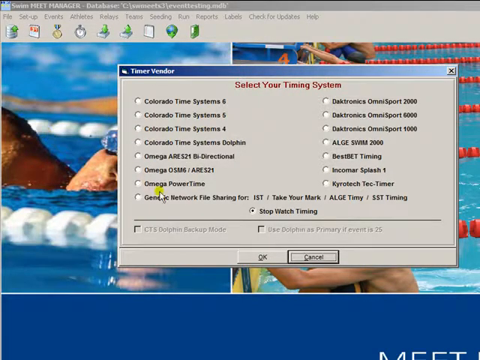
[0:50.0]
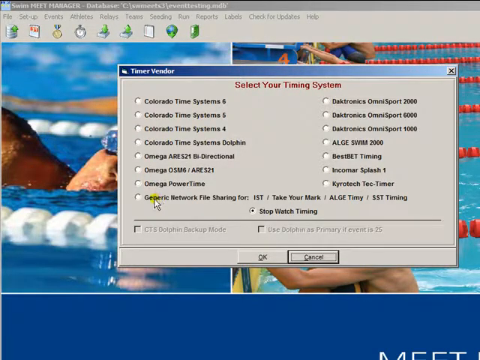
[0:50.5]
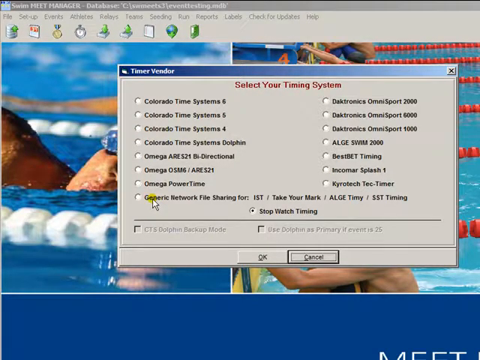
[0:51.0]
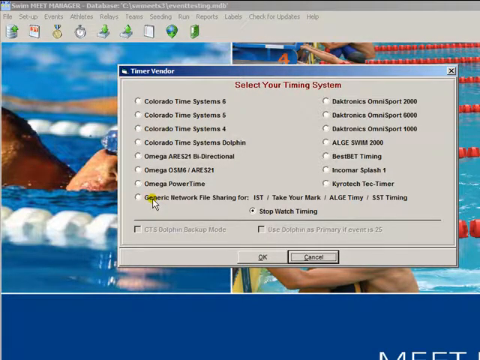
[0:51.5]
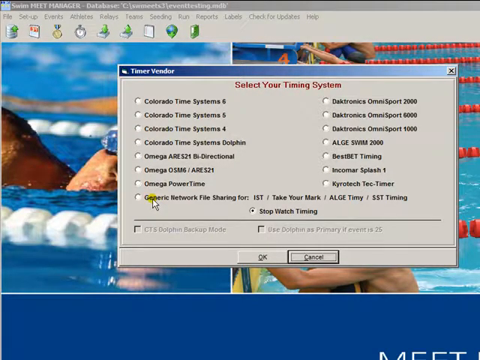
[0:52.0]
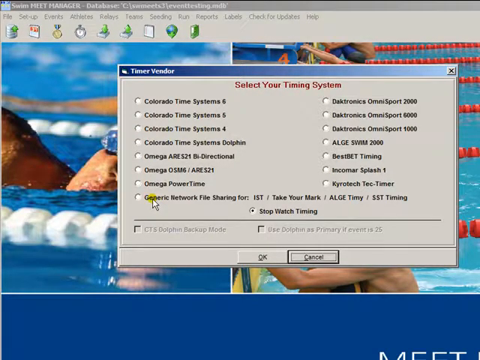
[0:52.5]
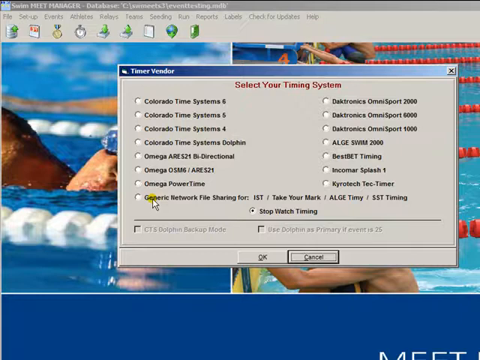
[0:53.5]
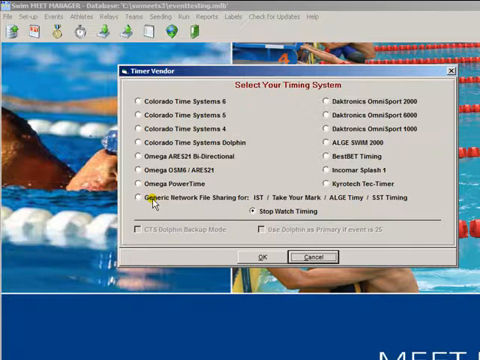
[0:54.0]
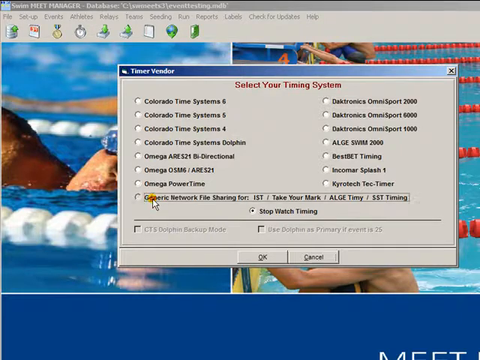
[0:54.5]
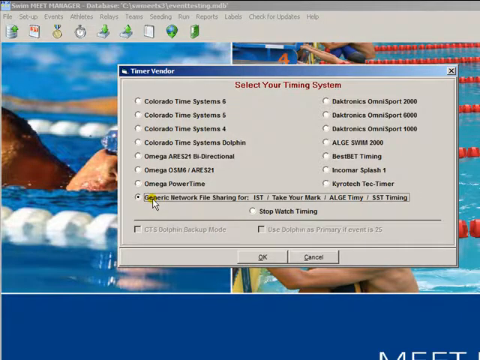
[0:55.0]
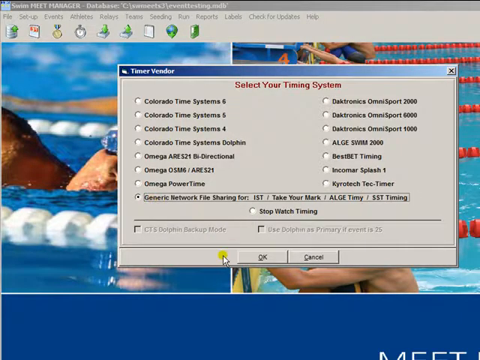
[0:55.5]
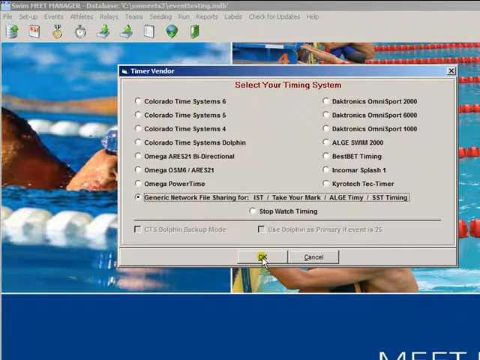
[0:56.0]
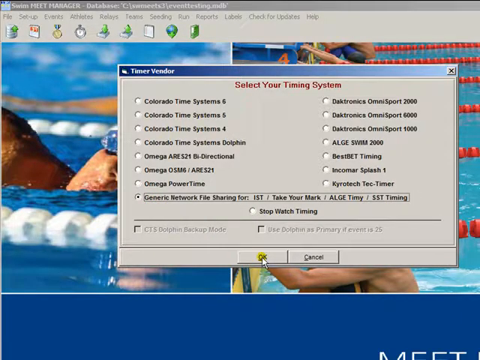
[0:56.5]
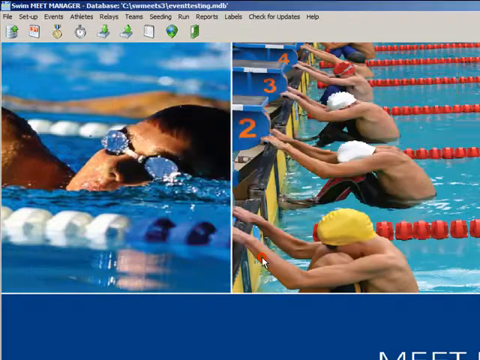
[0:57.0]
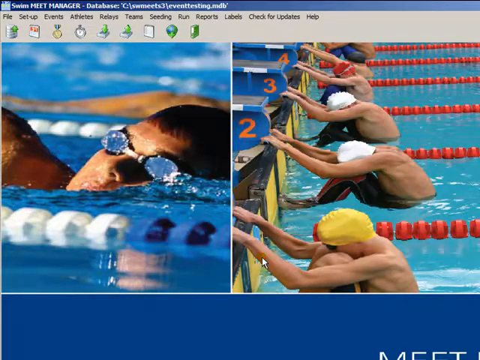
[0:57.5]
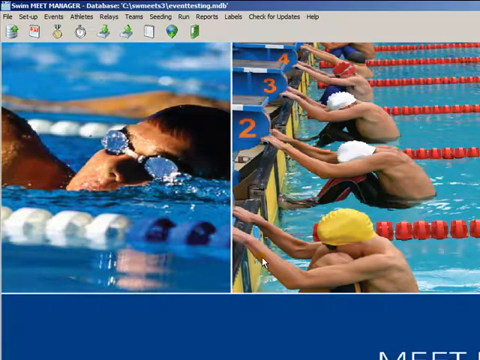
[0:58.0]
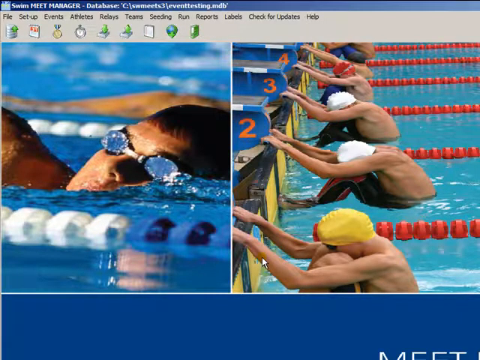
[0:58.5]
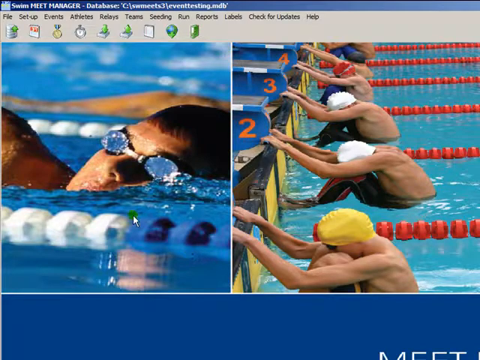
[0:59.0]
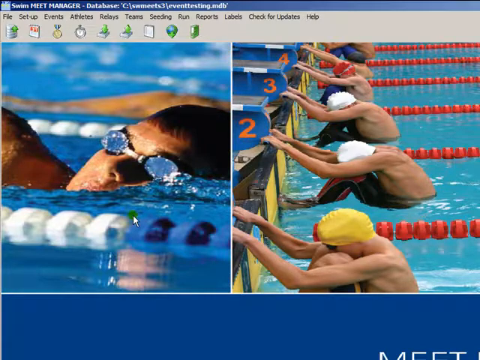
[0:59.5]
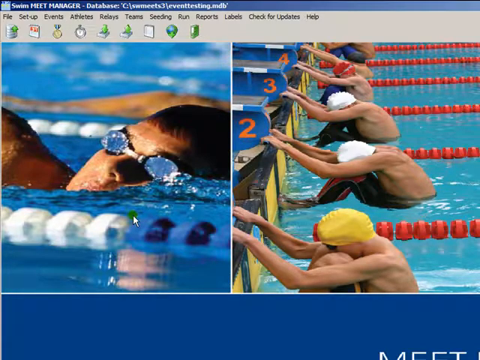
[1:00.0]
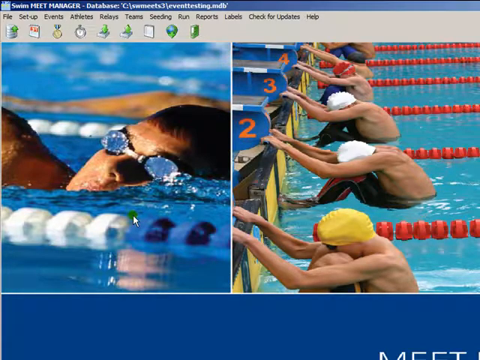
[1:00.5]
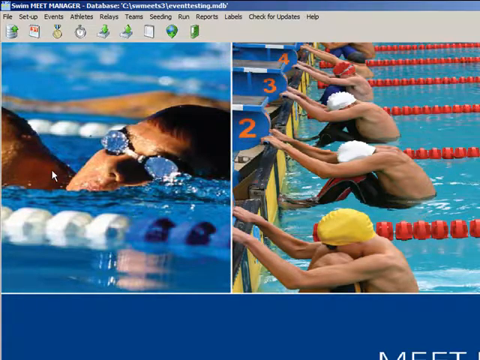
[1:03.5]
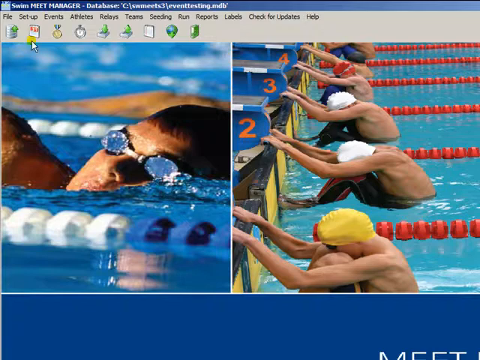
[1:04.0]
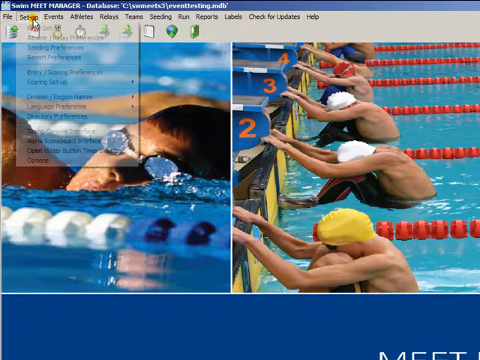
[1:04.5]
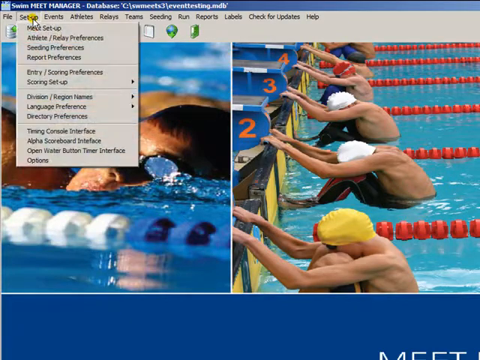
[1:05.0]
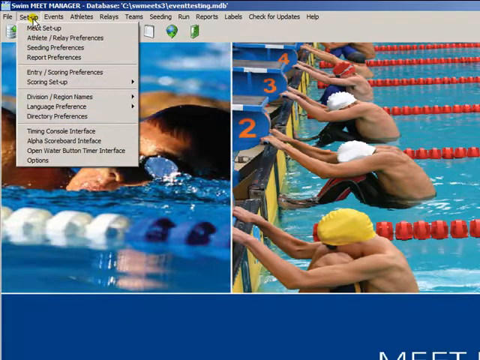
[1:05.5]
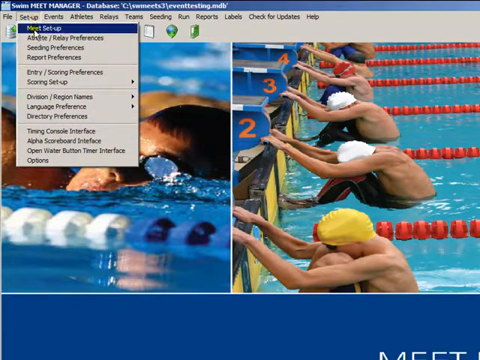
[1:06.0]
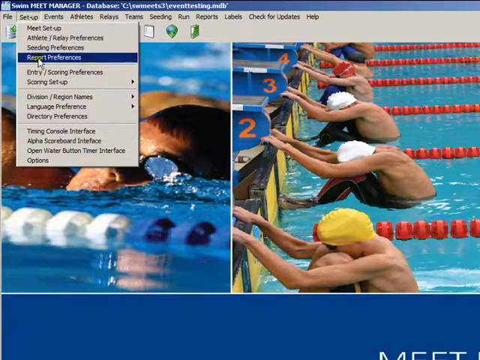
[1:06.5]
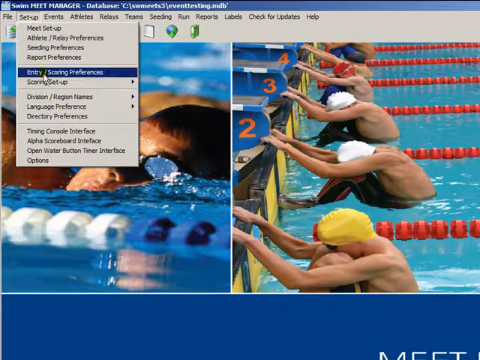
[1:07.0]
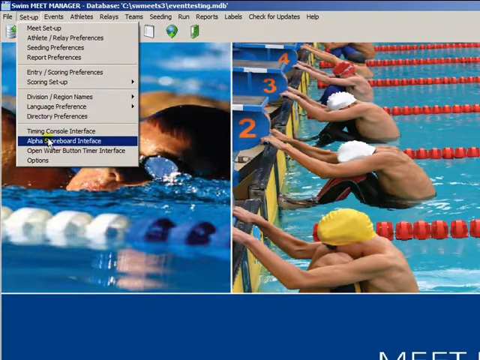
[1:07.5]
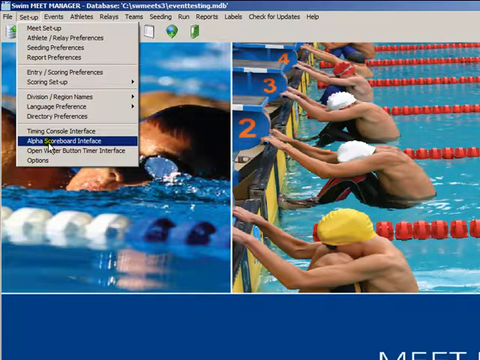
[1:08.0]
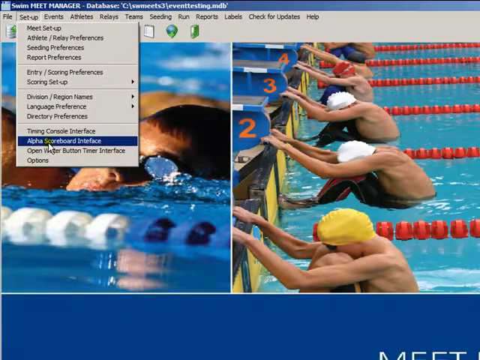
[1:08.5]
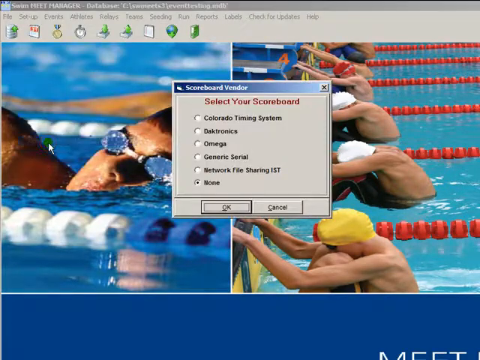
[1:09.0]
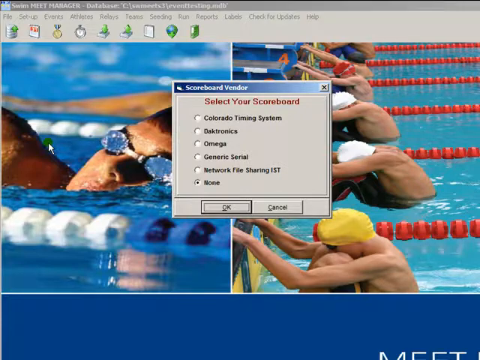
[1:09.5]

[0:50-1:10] The timer vendor menu is open, with several timing vendors visible to select. The demonstrator selects the option for generic network sharing for "IST / Take Your Mark / ALGE Timy / SST" timing, then clicks OK and the menu closes, revealing a portion of the background with two different images from a swim meet. The demonstrator then selects the Setup menu at the top left, which opens a menu with several options, and selects Alpha Scoreboard Interface. The Scoreboard Vendor menu is visible very briefly, with six options: "Colorado Timing Systems", "Daktronics", "Omega", "Generic Serial", "Network File Sharing IST" and "None".